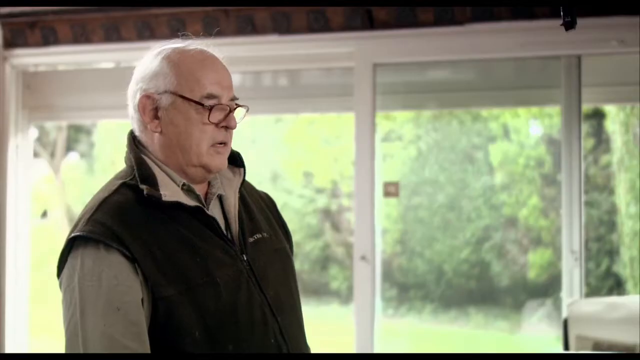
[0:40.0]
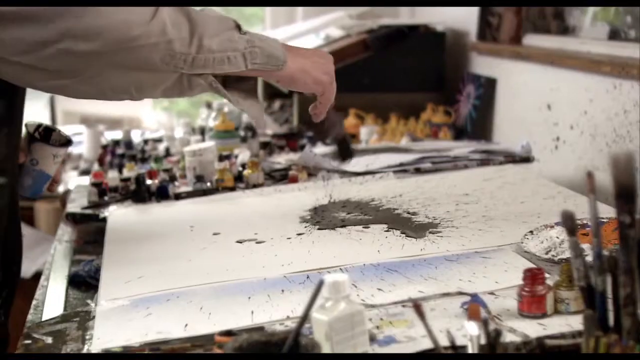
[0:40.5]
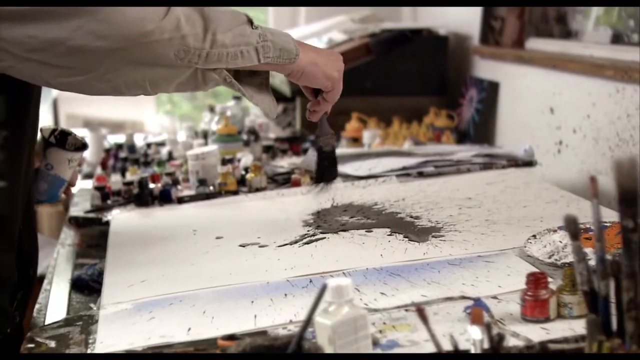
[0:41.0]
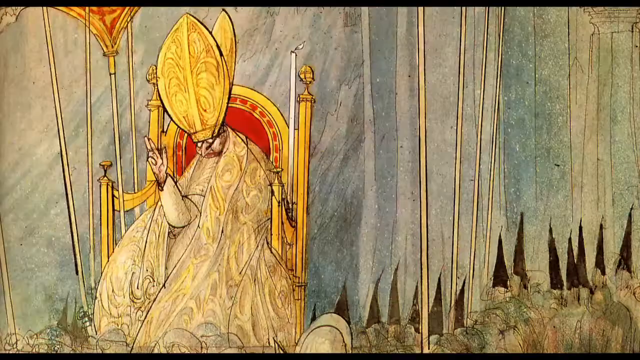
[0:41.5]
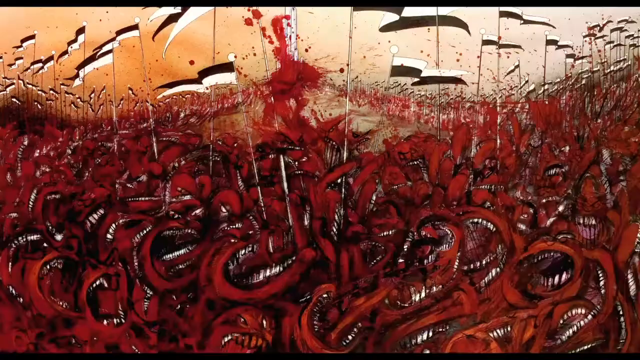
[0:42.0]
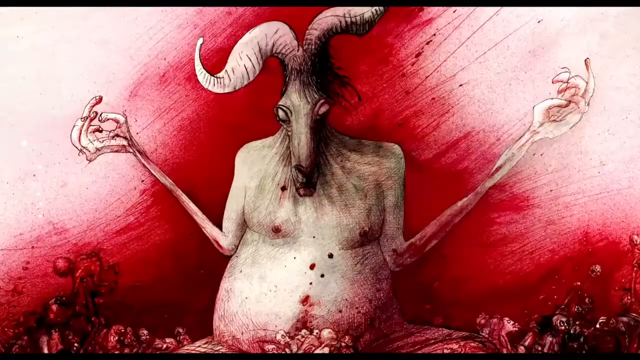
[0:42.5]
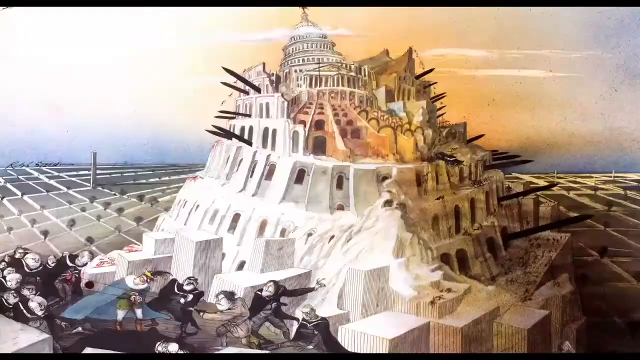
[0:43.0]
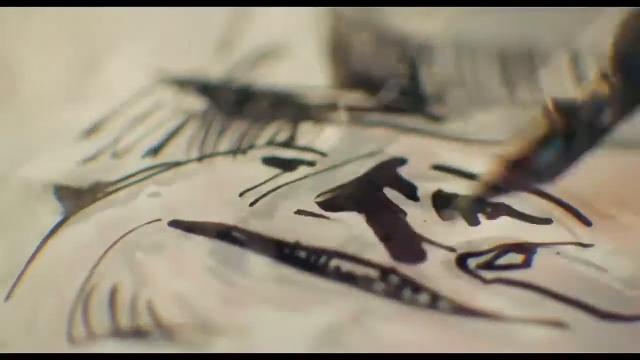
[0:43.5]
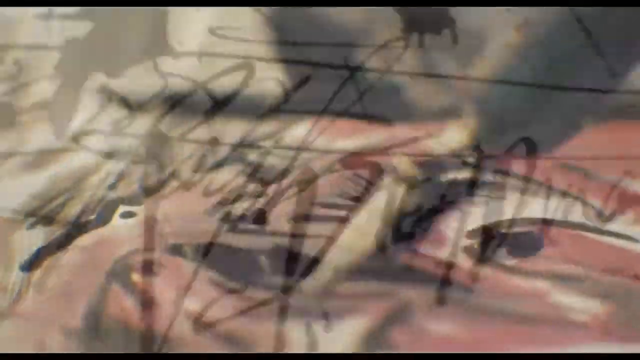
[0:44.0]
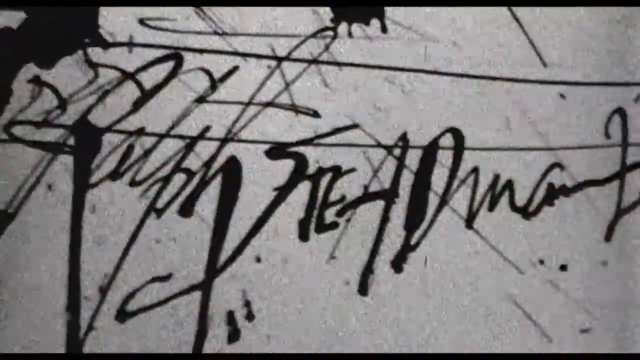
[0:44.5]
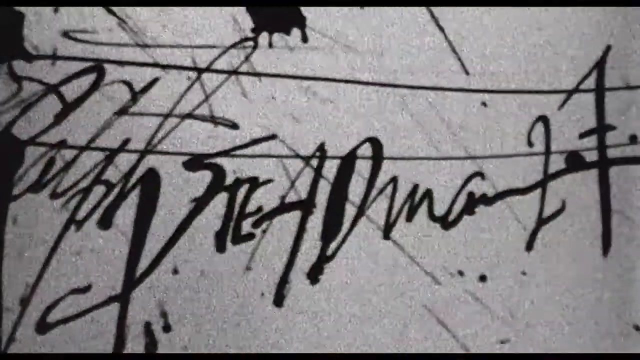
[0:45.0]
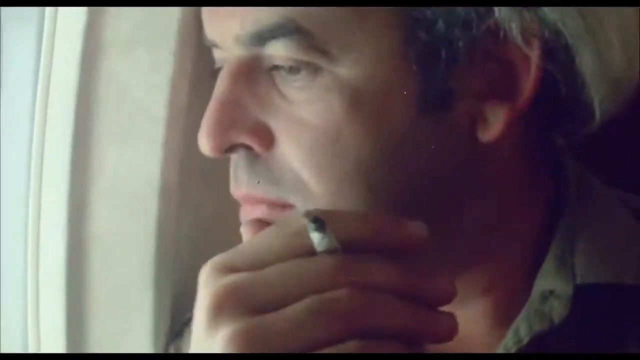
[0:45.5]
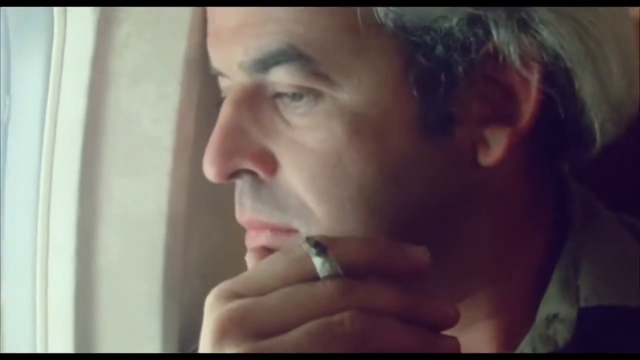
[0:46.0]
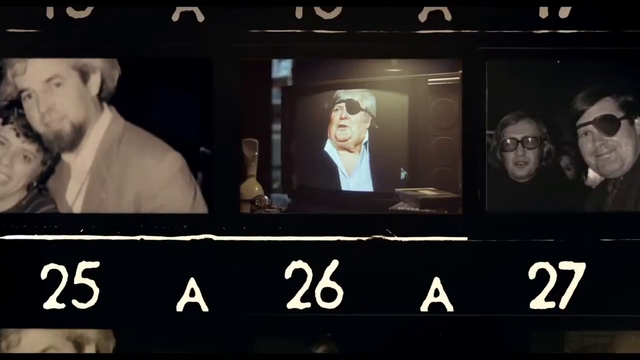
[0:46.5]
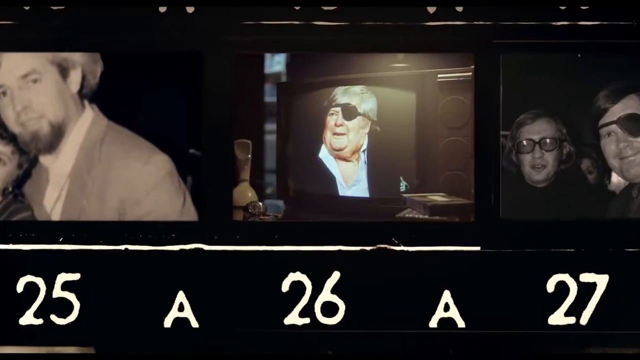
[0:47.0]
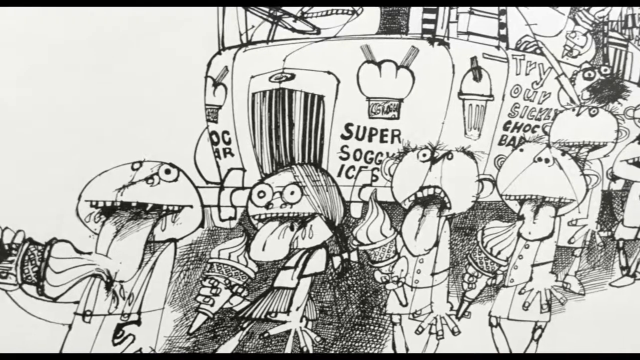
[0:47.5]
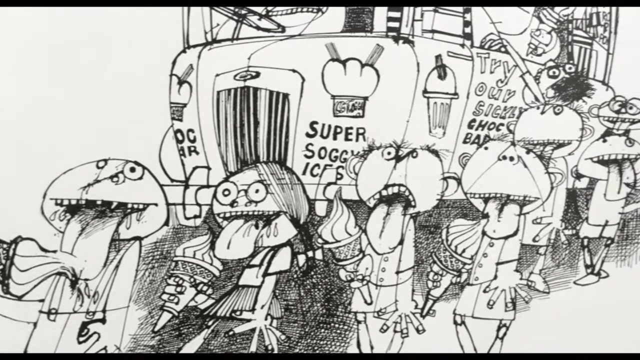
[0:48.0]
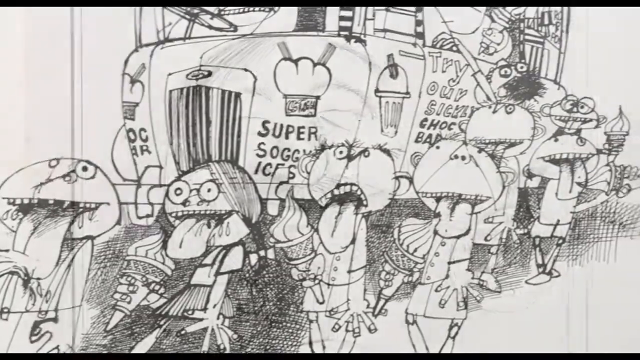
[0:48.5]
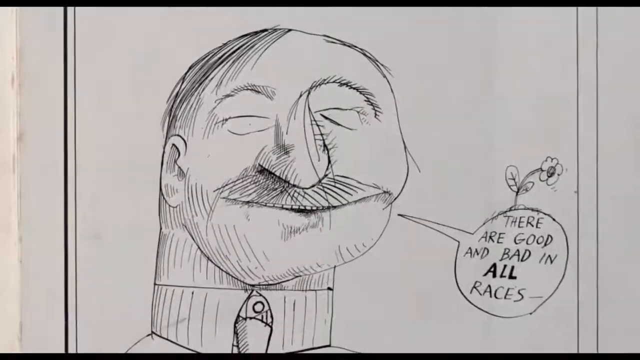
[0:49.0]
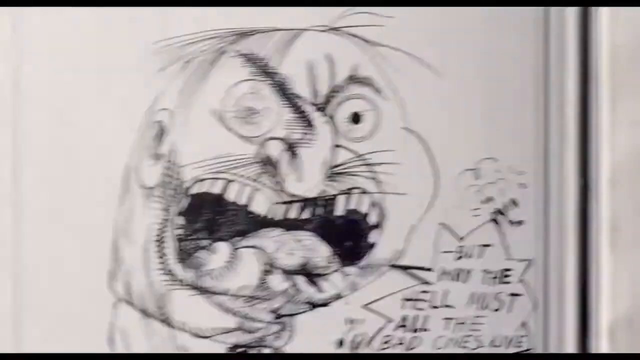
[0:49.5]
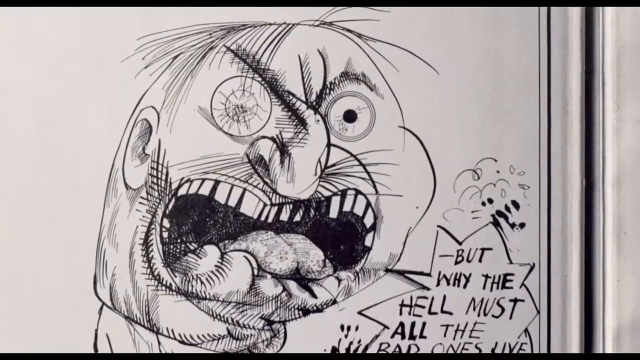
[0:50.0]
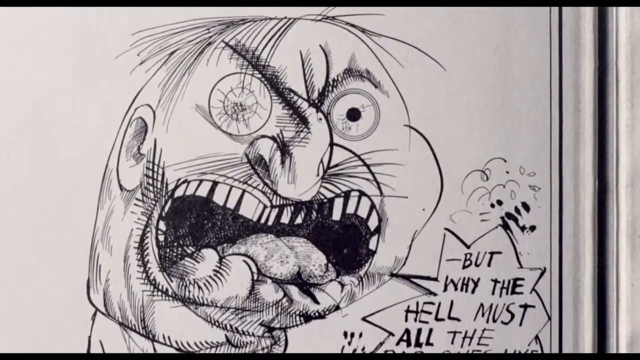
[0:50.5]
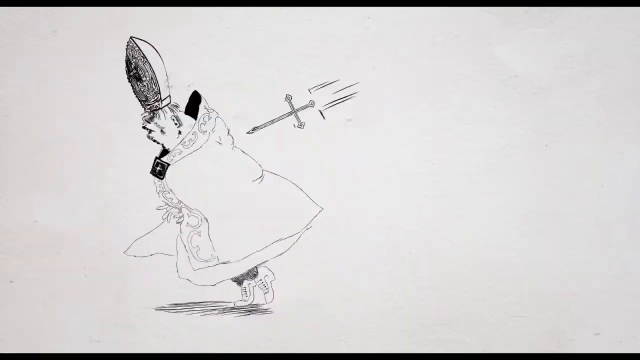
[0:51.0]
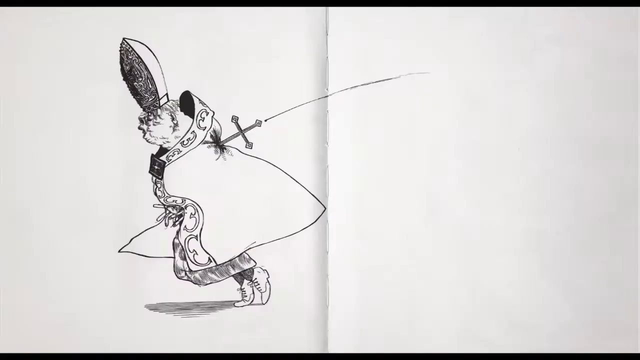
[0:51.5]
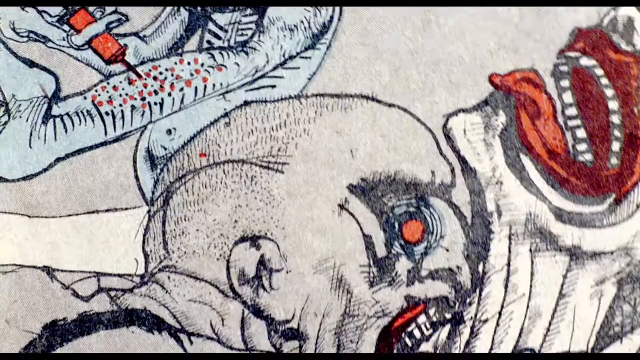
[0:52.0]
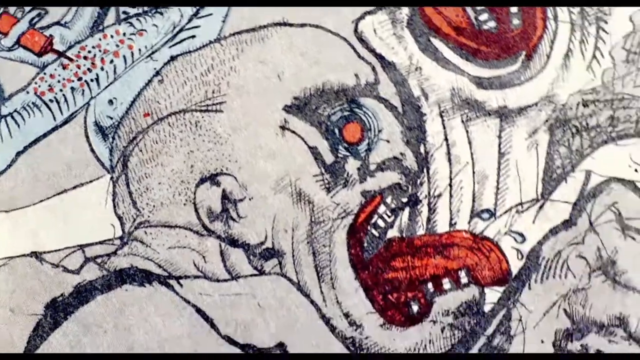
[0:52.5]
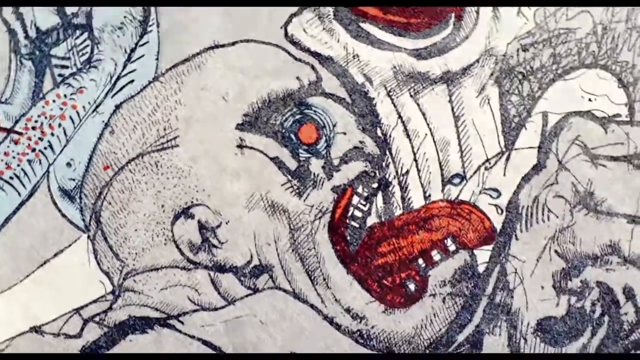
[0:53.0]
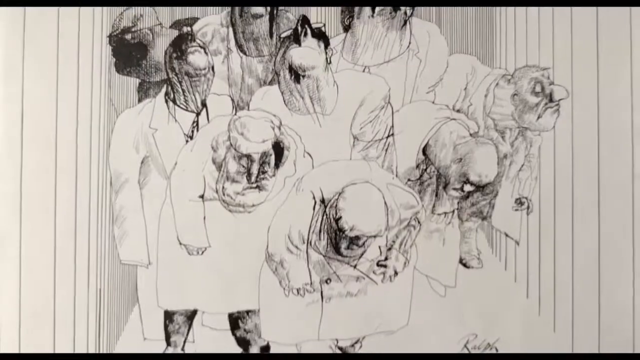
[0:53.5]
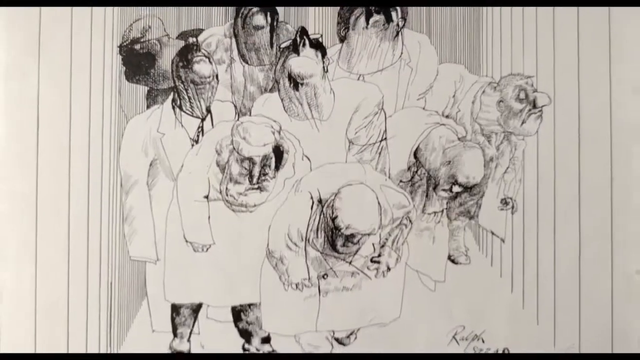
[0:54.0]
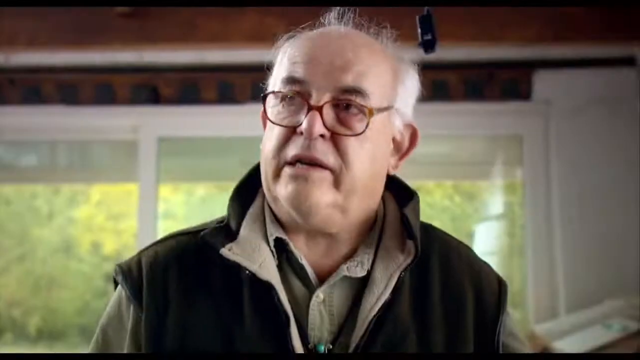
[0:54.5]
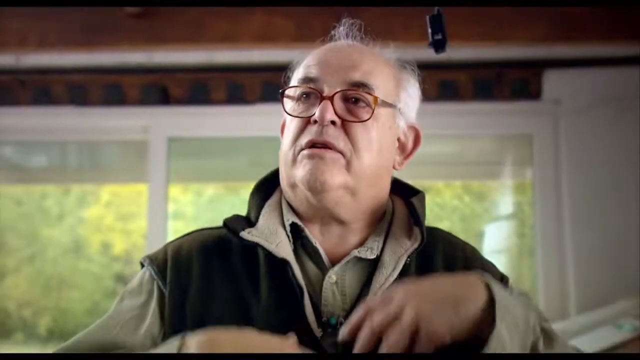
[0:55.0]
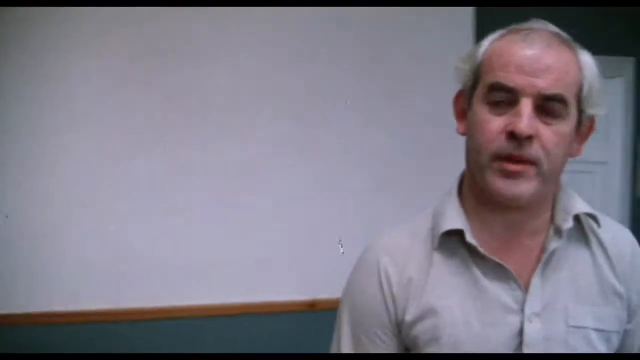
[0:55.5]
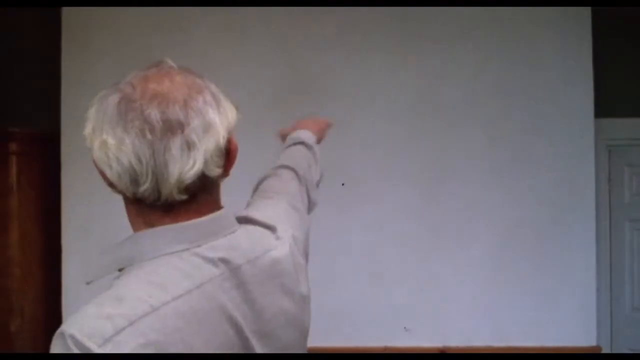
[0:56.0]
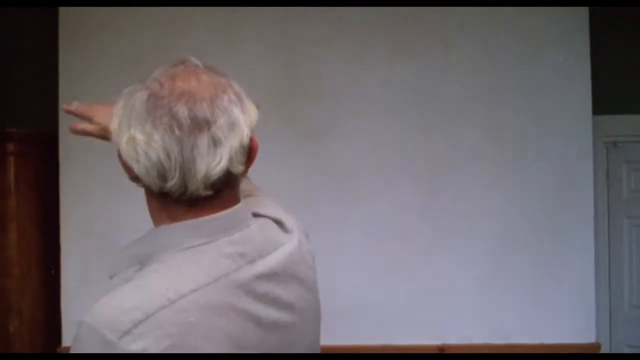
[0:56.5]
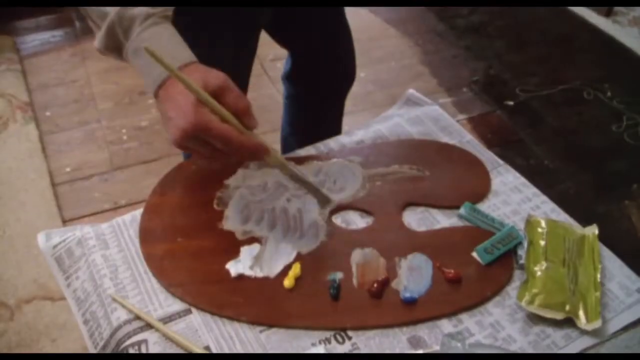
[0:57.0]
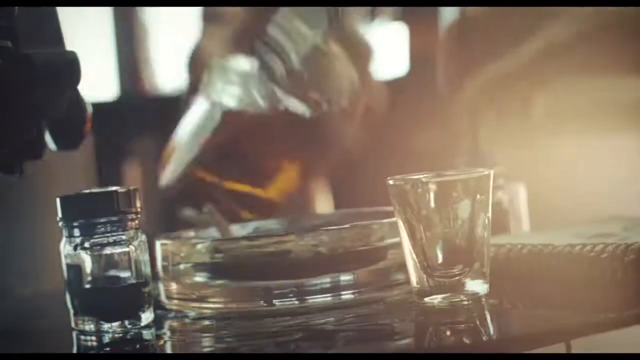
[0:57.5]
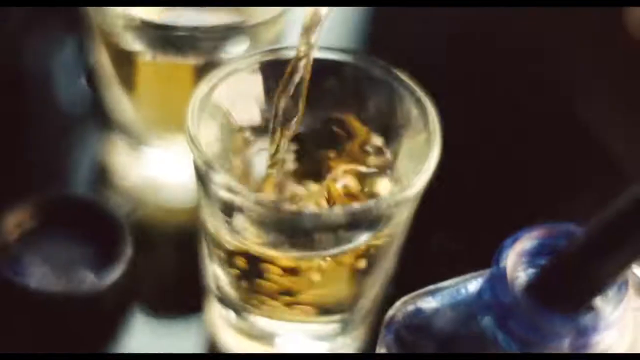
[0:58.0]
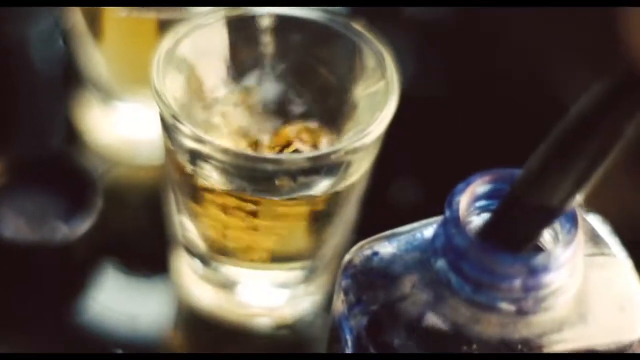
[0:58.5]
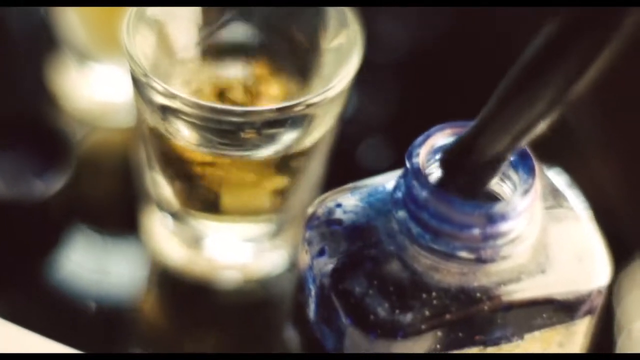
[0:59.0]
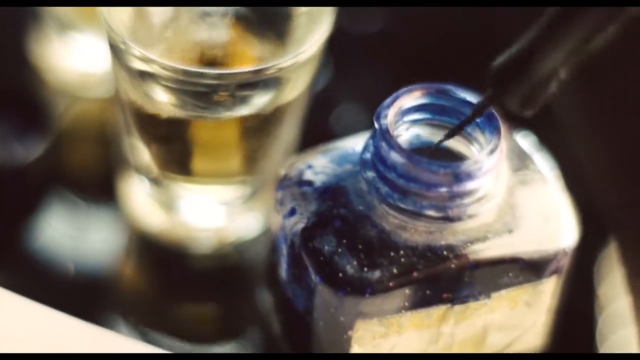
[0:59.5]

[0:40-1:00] The man continues creating images on 3D paper. He is seen smoking a cigarette. There is animation on the paper with diverse images, which appear horrific. Someone is drinking a whiskey.